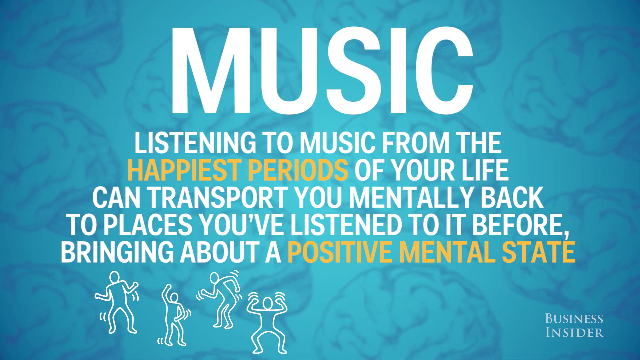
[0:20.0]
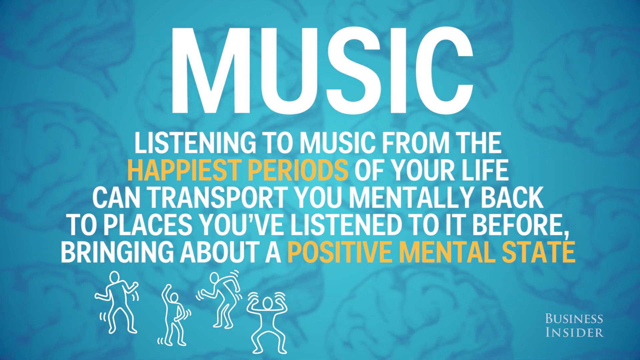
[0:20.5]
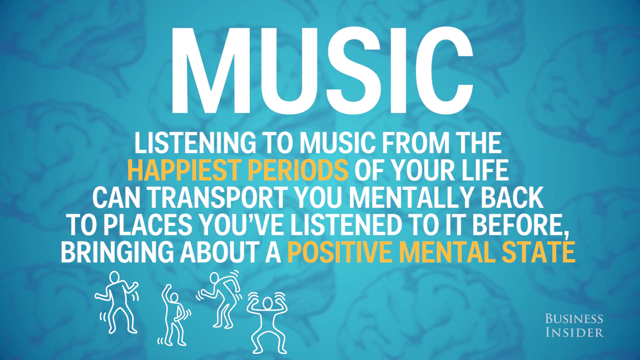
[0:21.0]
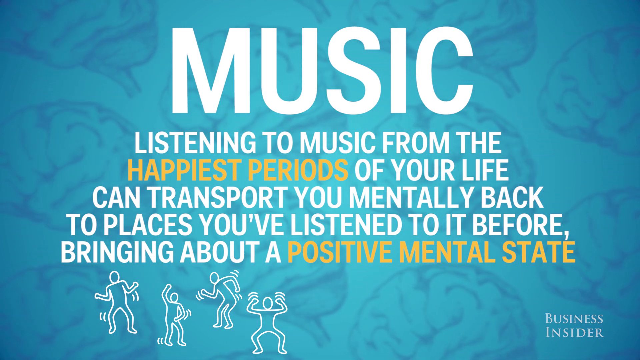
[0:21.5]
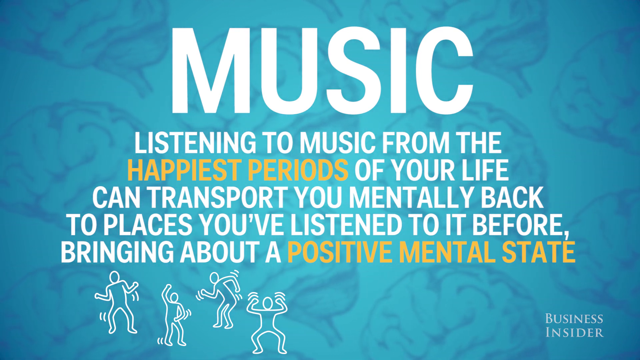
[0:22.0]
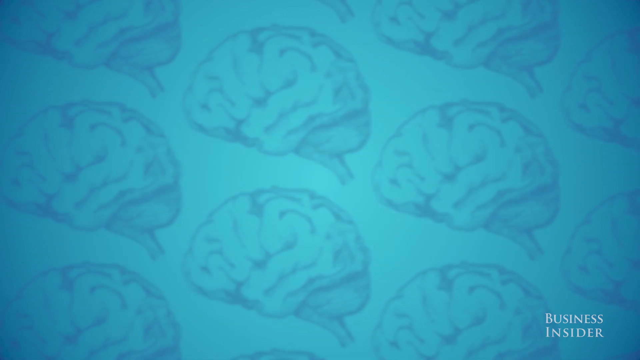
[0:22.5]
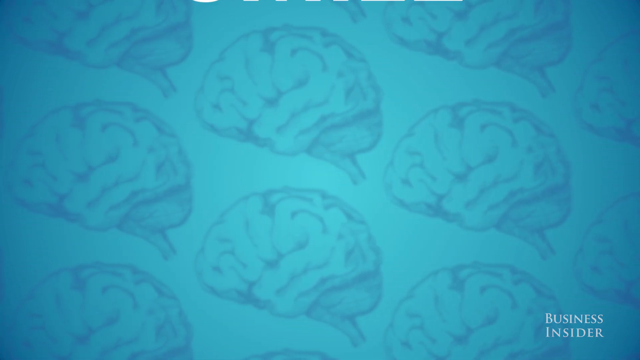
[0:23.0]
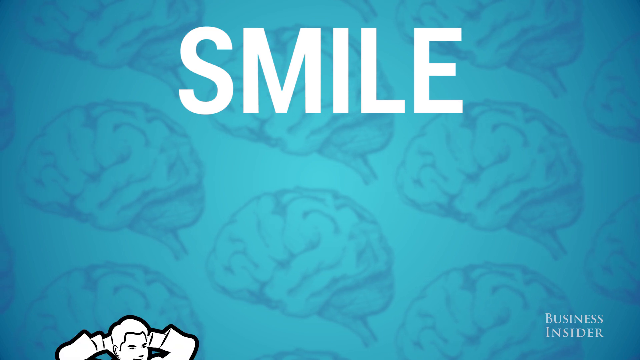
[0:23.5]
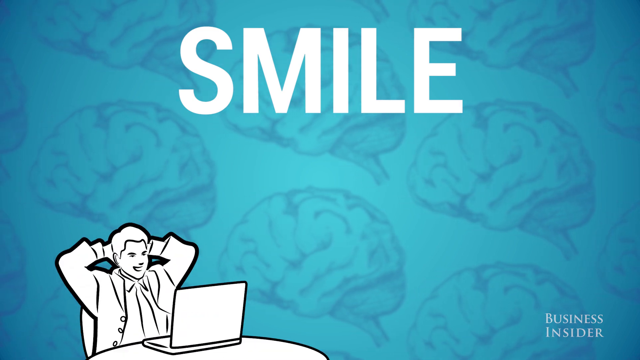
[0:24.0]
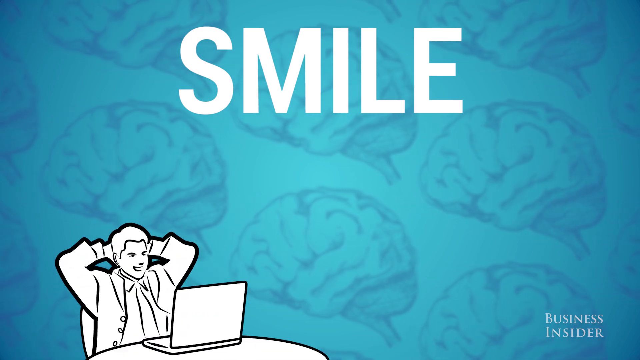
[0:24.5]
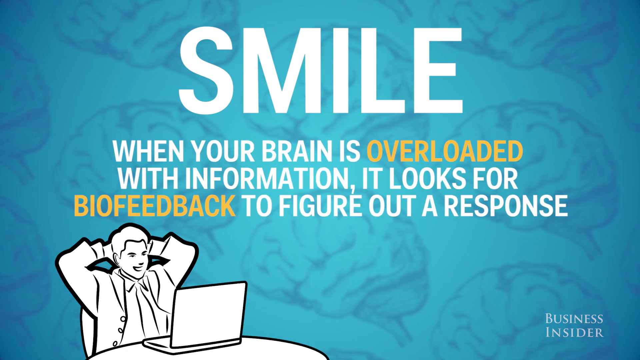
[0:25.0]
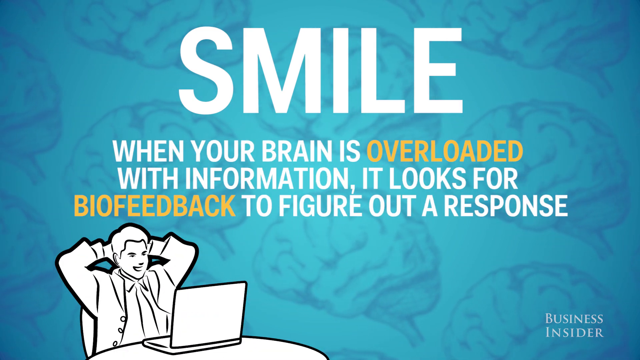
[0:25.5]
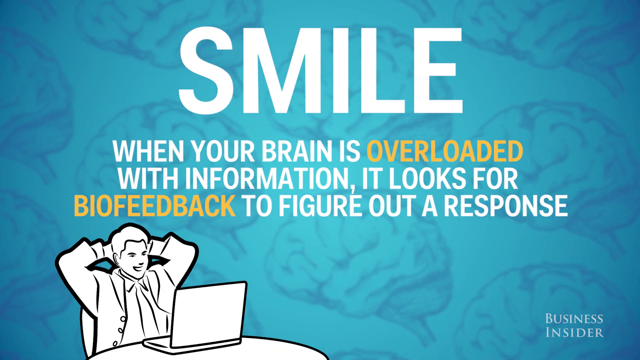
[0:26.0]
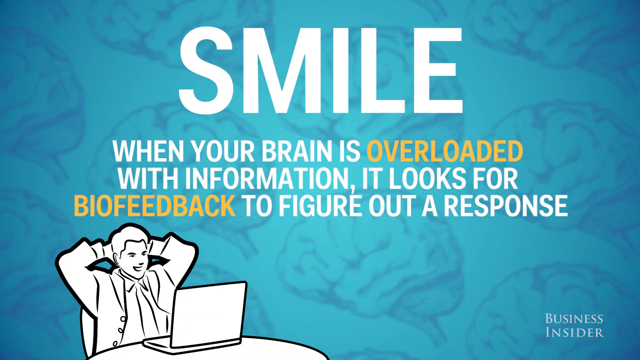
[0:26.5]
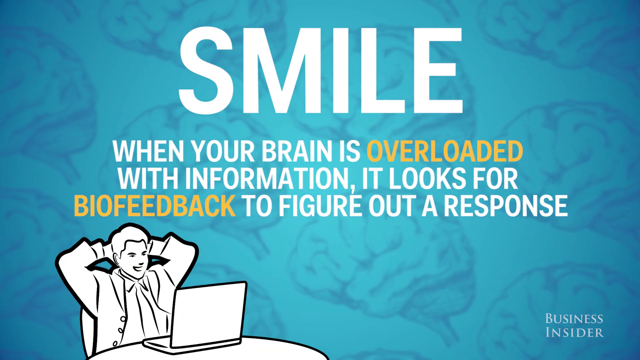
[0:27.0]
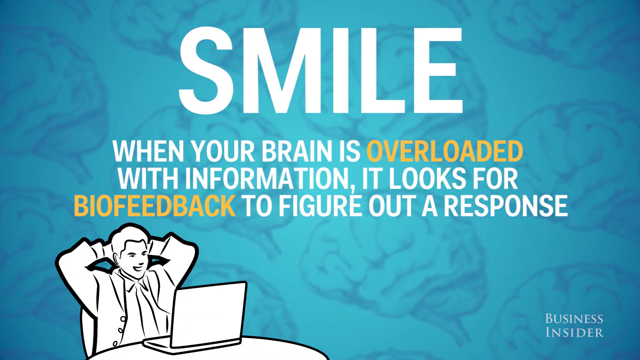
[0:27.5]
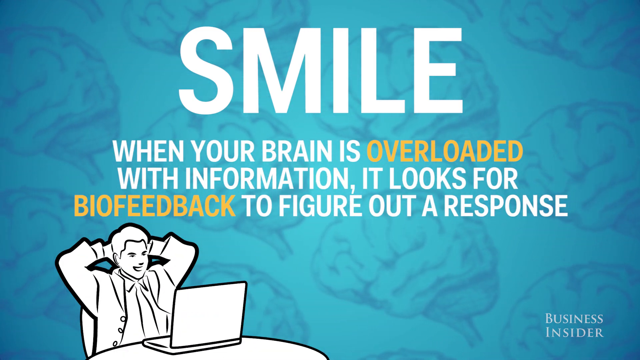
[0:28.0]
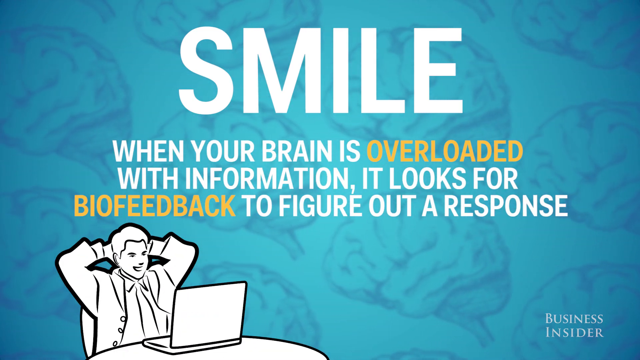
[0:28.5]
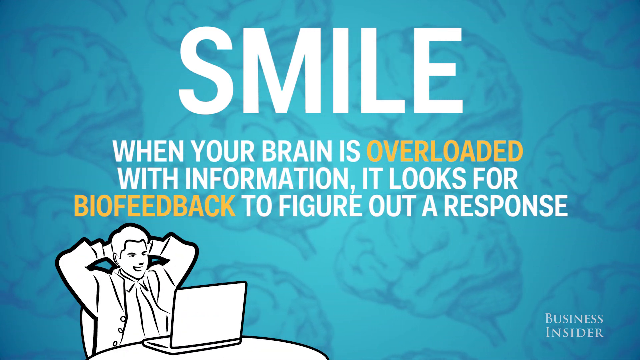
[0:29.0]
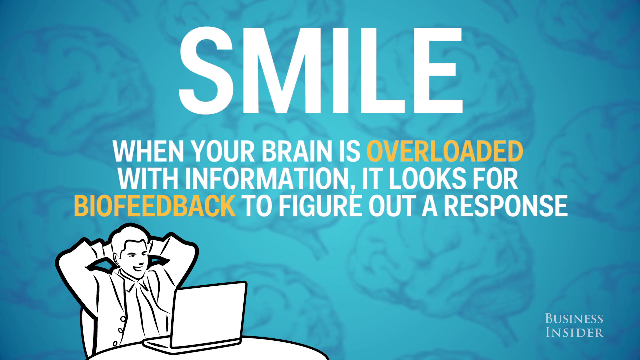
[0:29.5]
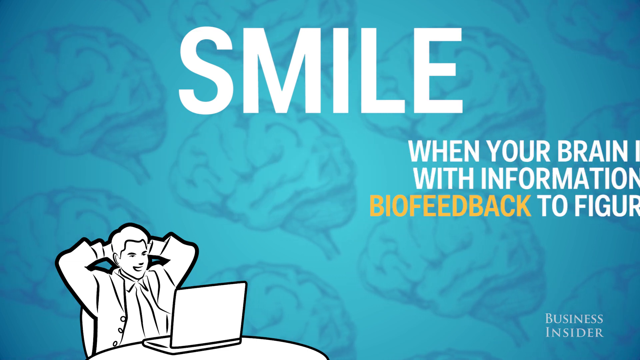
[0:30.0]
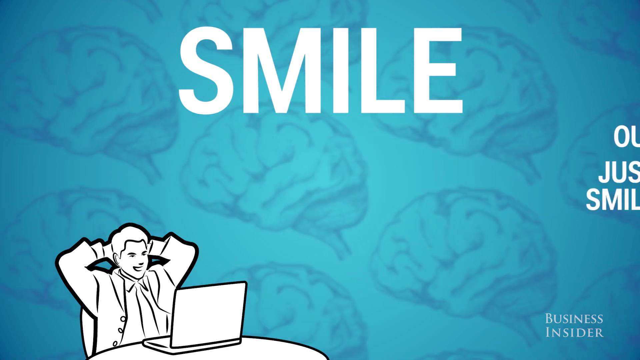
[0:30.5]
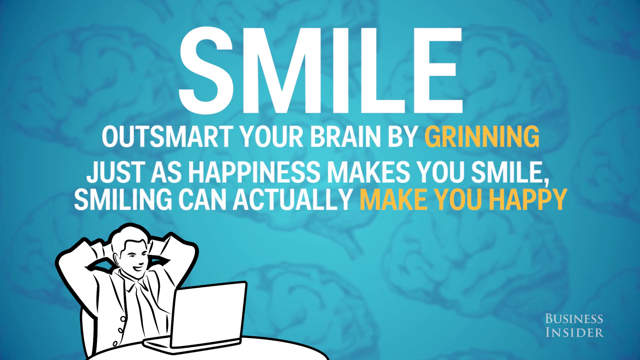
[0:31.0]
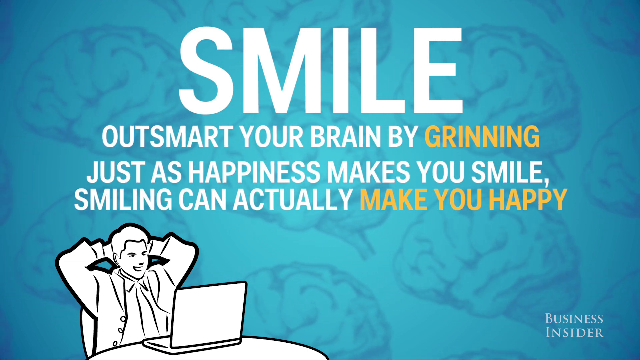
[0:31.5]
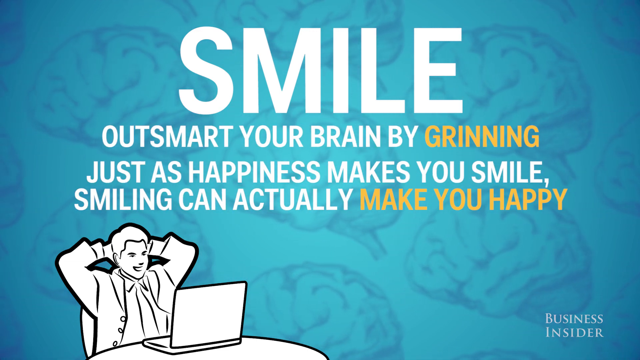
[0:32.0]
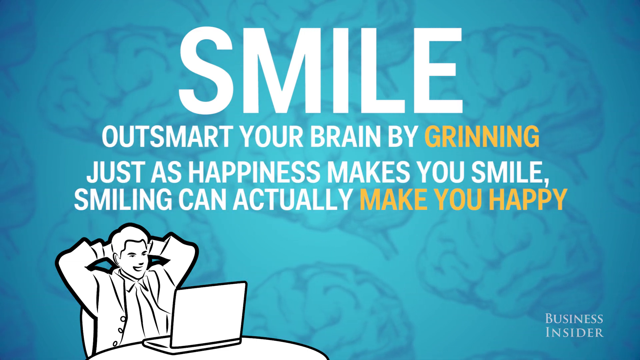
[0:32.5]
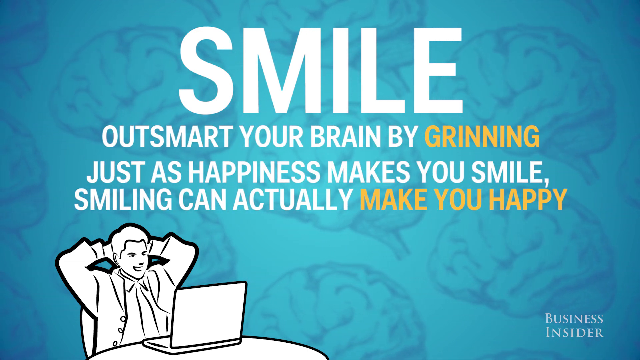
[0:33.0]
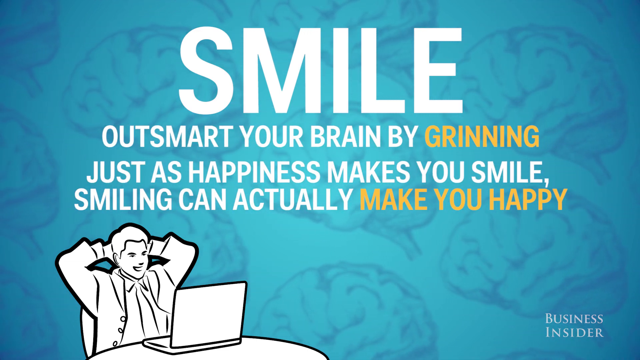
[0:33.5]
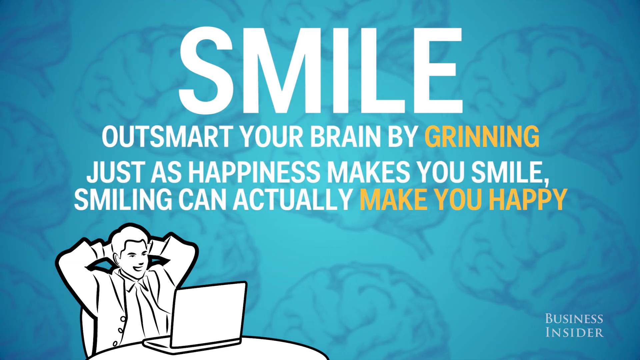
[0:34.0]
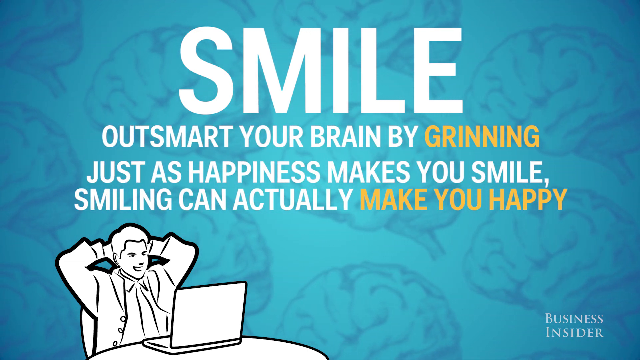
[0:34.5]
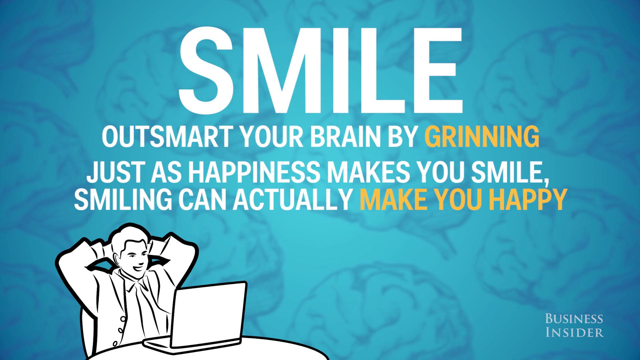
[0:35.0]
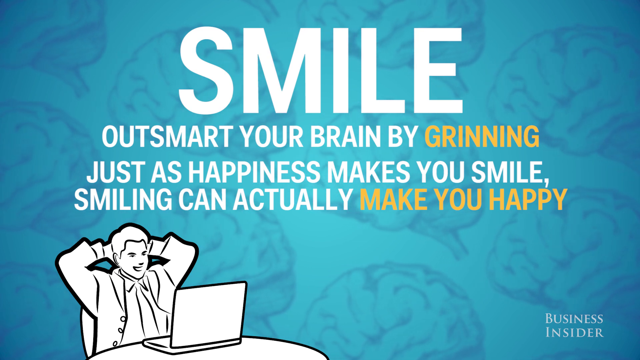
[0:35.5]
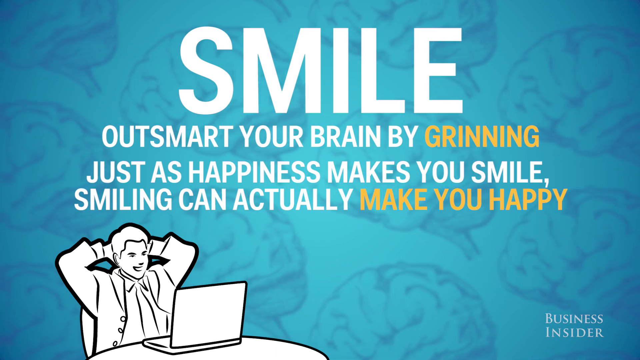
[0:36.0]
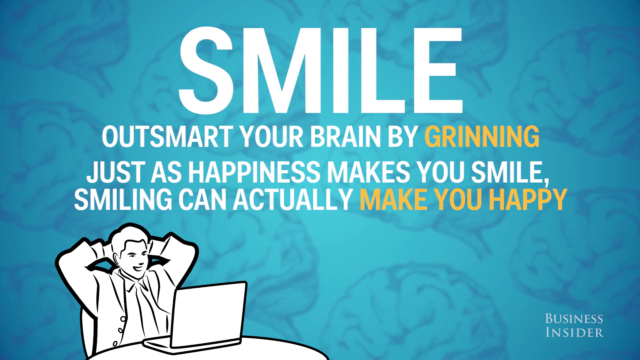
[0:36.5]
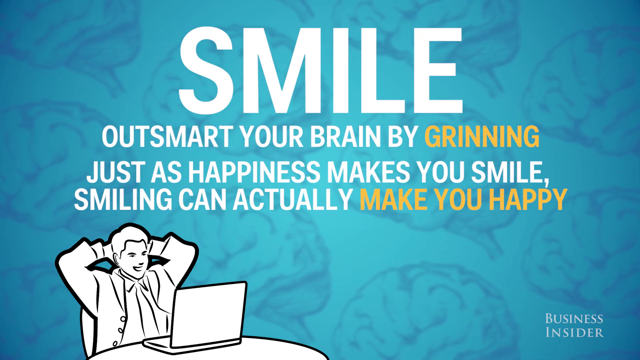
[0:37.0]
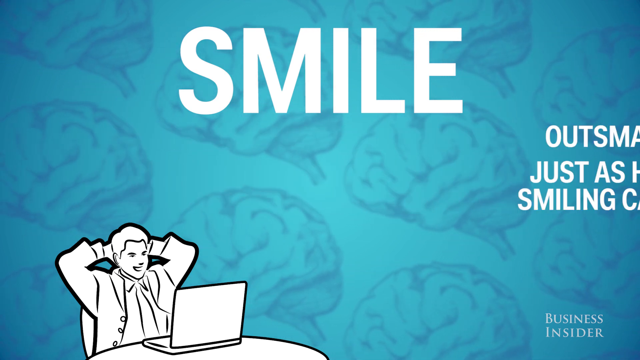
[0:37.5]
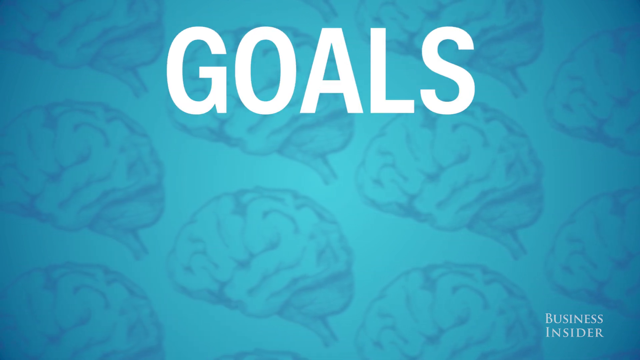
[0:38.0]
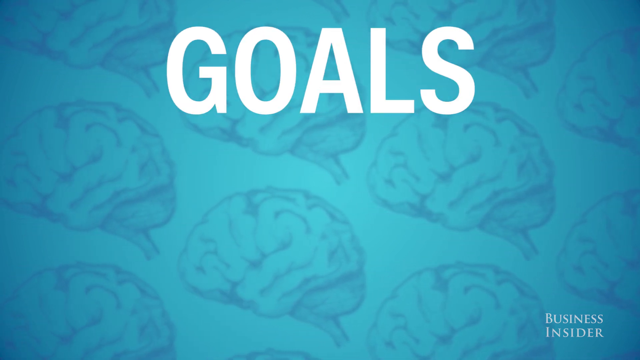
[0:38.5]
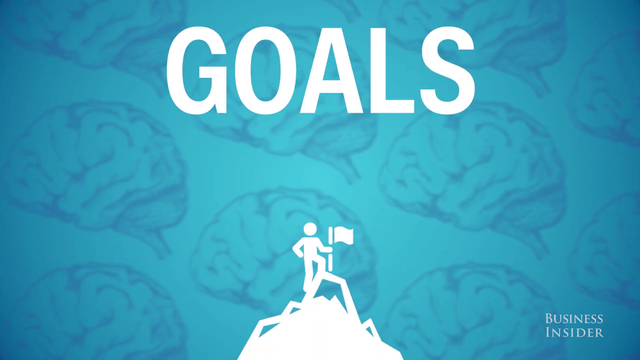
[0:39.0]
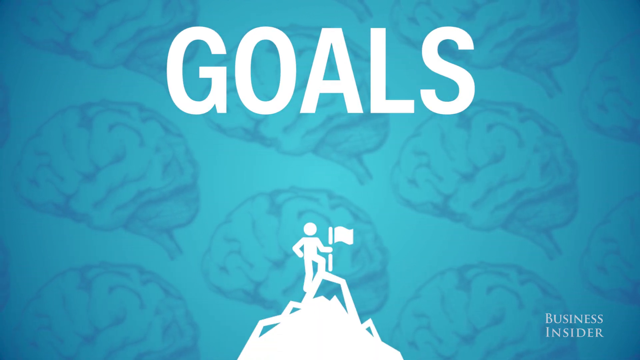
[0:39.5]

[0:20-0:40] The brief text about music disappears quickly, leaving just the blue background with brains. The word "SMILE" appears in white capital letters, with text below reading "when your brain is overloaded with information, it looks for biofeedback to figure out a response"; "overloaded" and "biofeedback" are in yellow. A drawing of a man appears, white with black outlines, with his hands extended behind his head and what looks like a laptop in front of him. "Business Insider" is in the bottom right corner. With "SMILE" still on screen, the text then reads "outsmart your brain by grinning. Just as happiness makes you smile, smiling can actually make you happy.", with "grinning" and "make you happy" in yellow. The blue background of many brains remains. The word "GOALS" then appears in white capital letters, with an icon at the bottom of a non-realistically drawn person climbing a mountain and putting a flag on its peak.